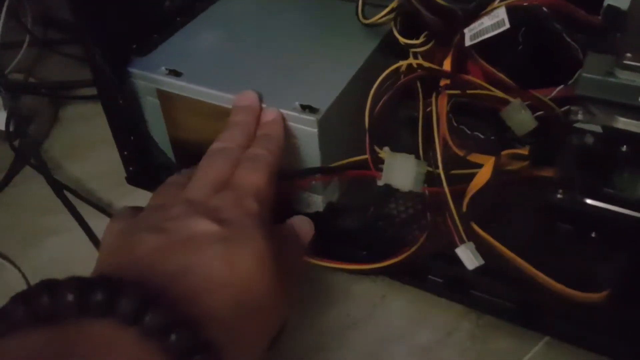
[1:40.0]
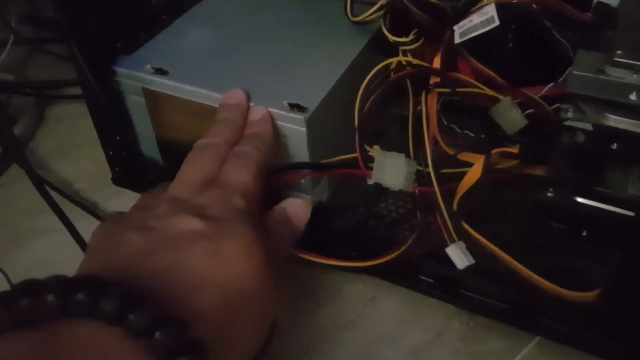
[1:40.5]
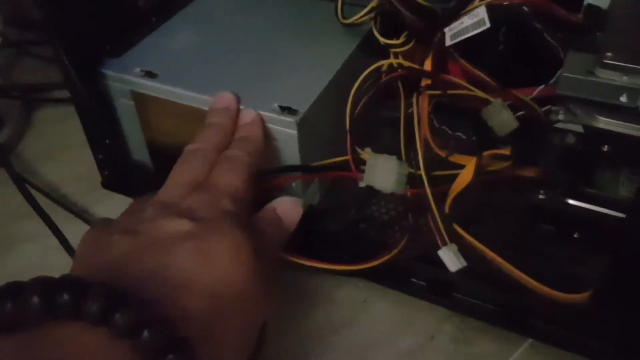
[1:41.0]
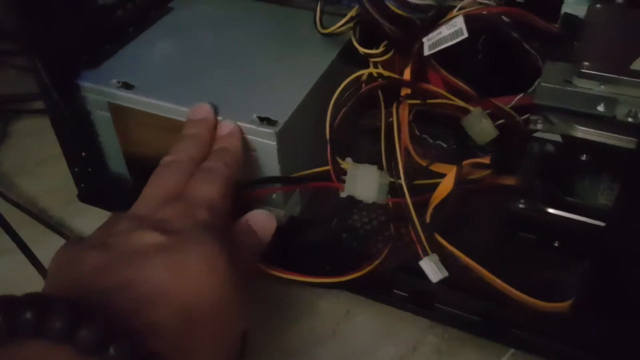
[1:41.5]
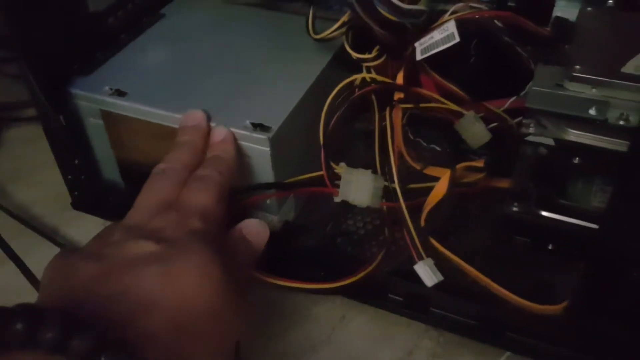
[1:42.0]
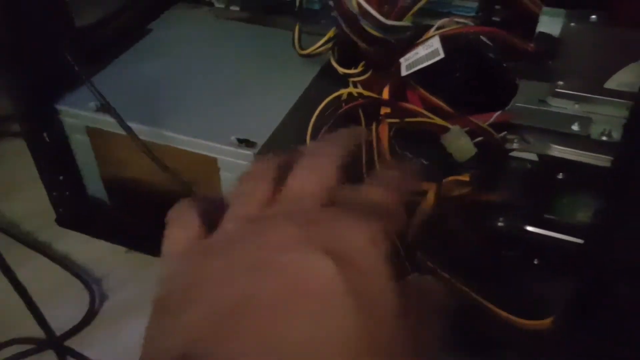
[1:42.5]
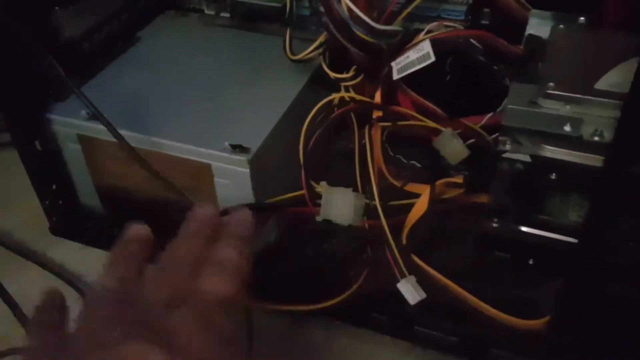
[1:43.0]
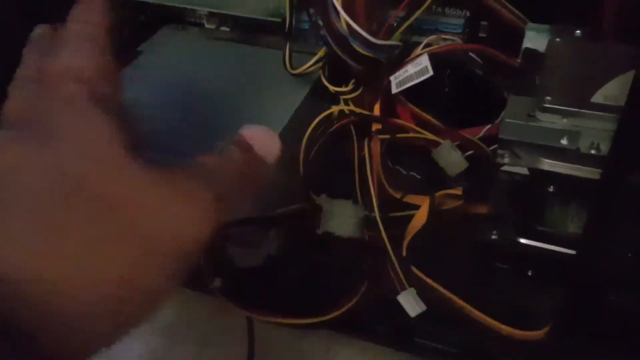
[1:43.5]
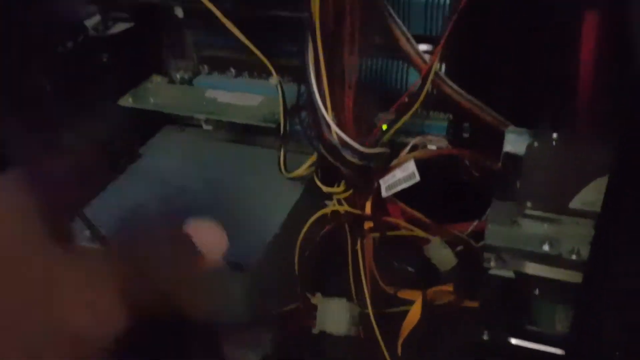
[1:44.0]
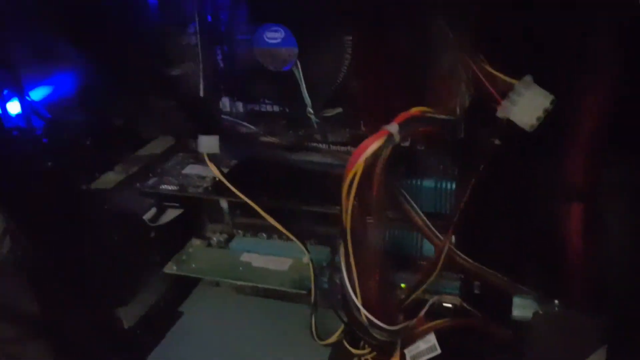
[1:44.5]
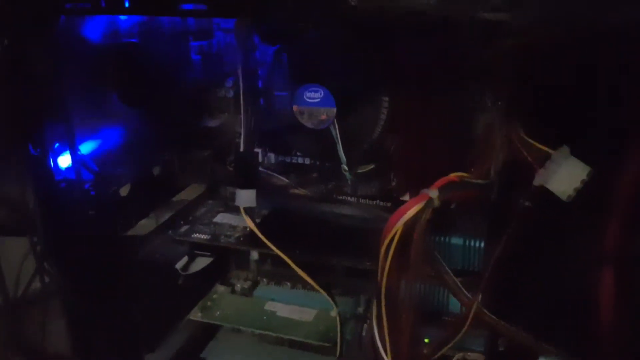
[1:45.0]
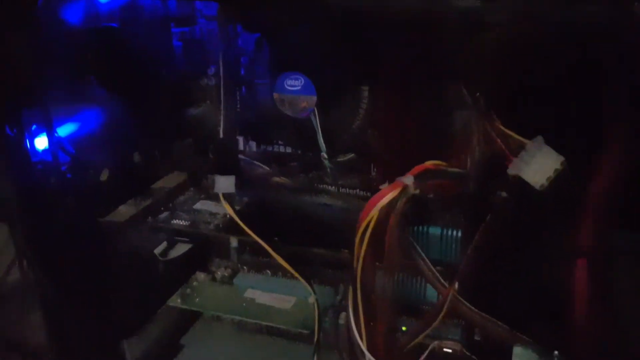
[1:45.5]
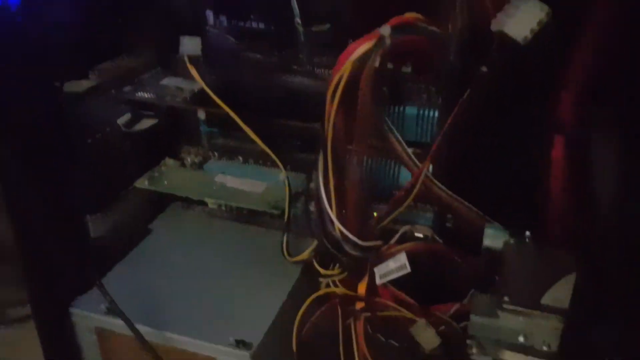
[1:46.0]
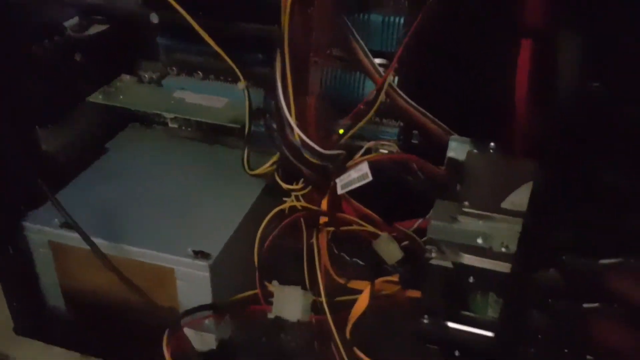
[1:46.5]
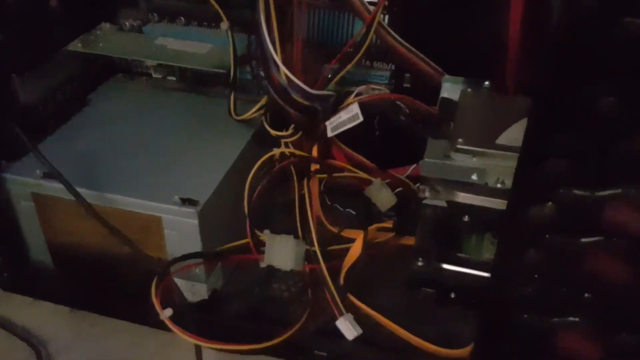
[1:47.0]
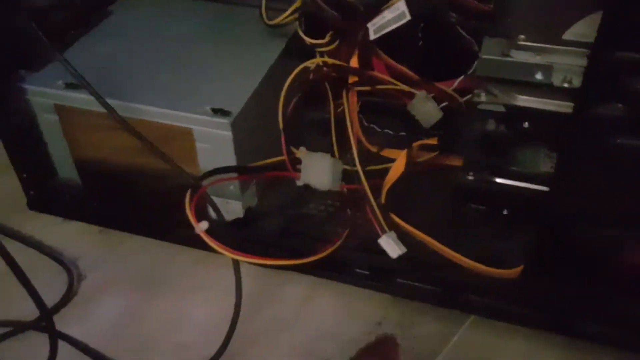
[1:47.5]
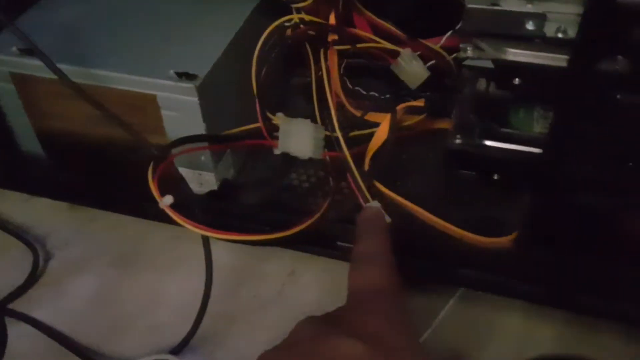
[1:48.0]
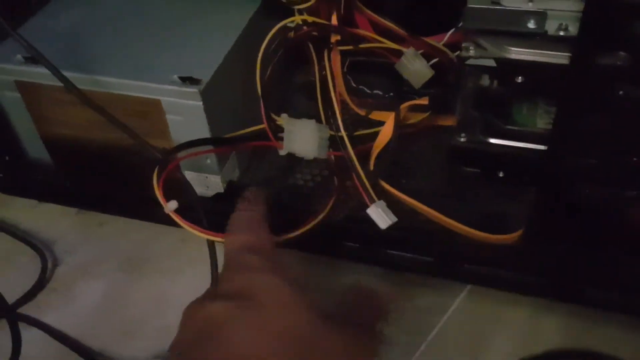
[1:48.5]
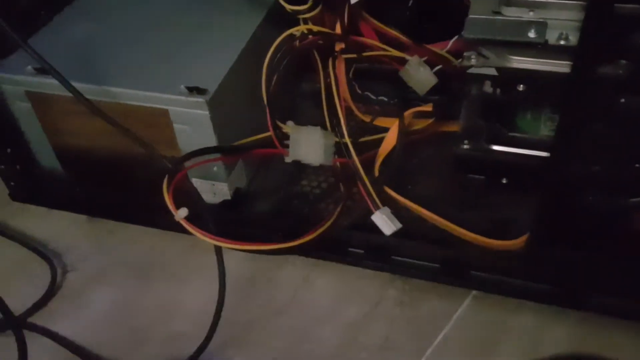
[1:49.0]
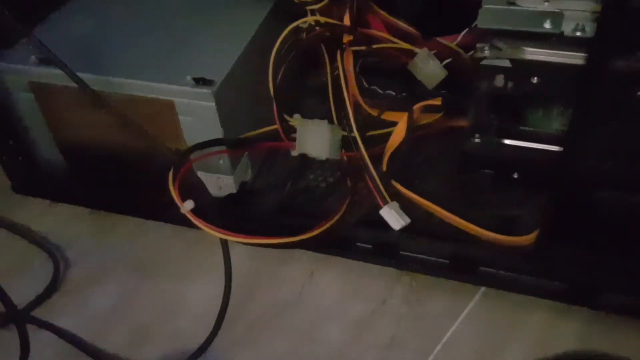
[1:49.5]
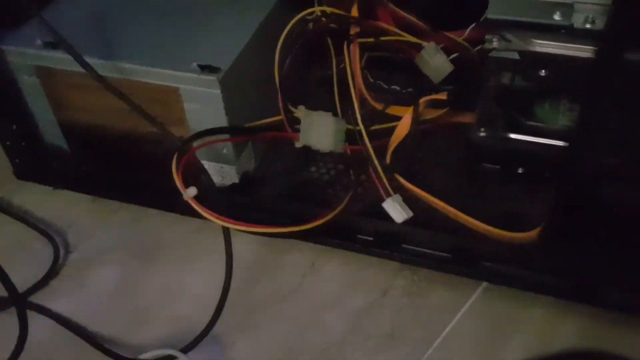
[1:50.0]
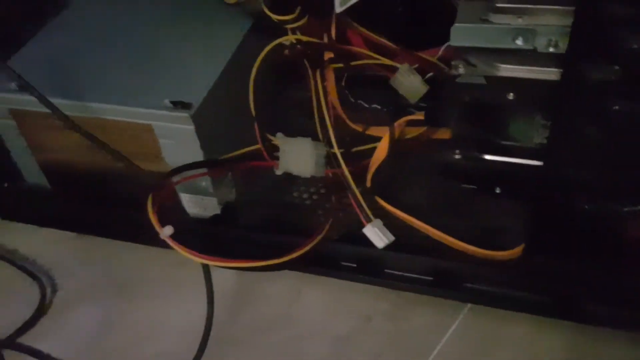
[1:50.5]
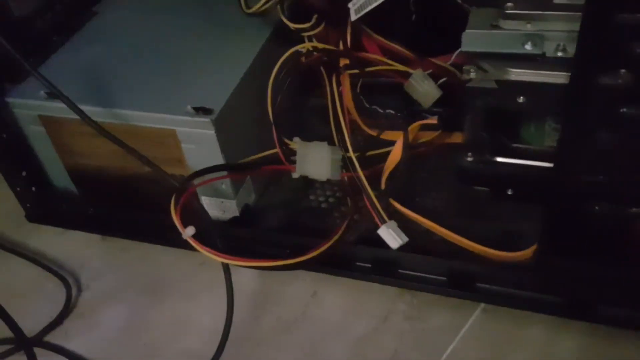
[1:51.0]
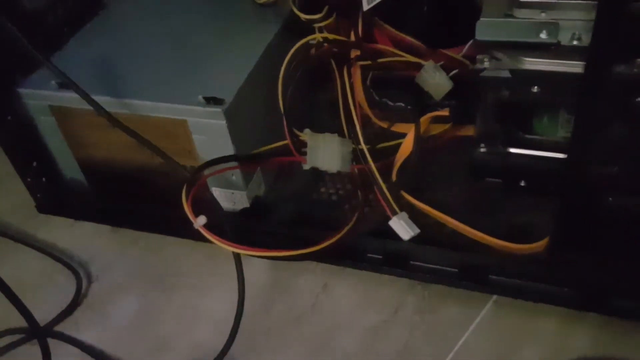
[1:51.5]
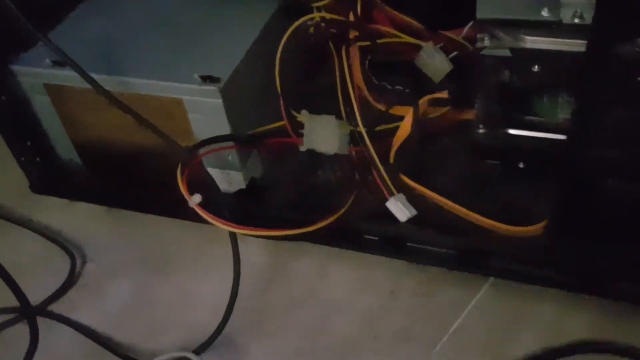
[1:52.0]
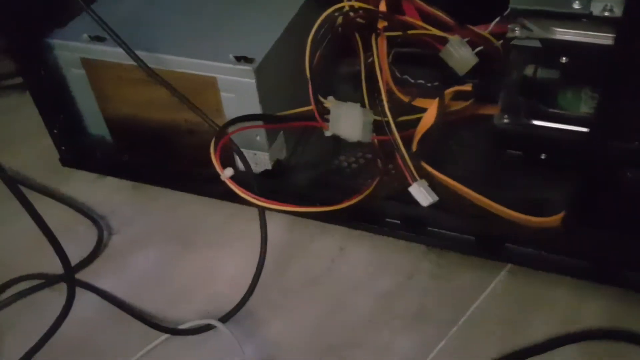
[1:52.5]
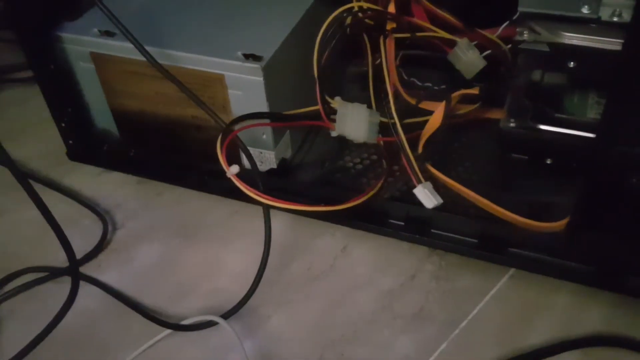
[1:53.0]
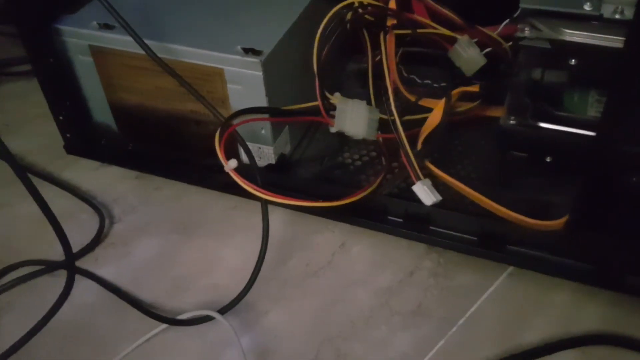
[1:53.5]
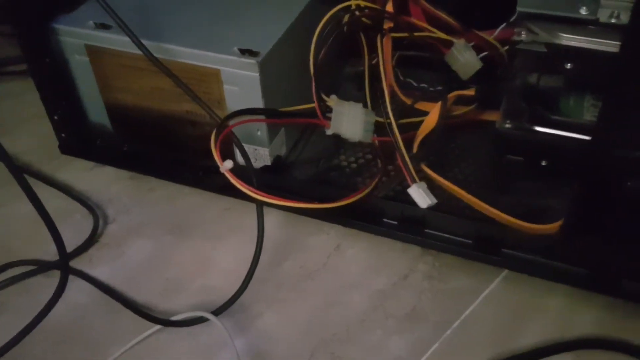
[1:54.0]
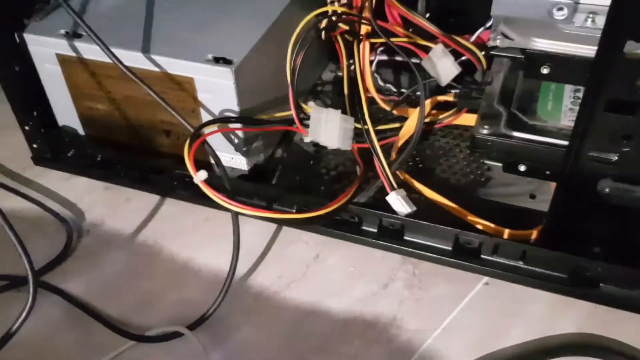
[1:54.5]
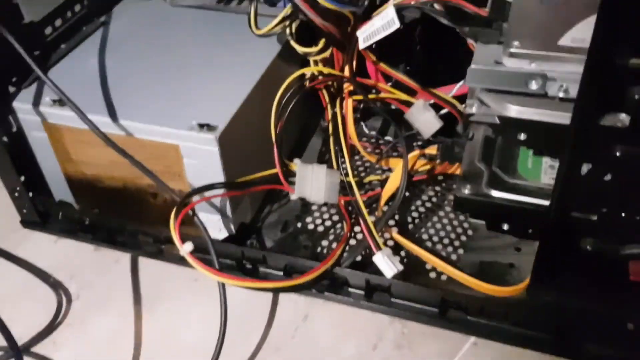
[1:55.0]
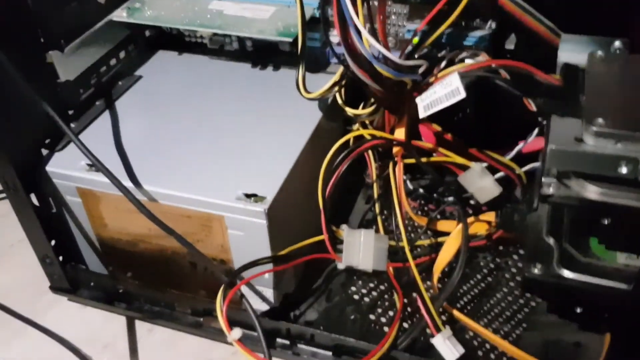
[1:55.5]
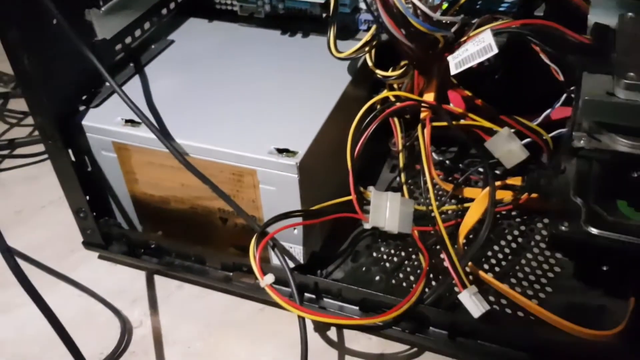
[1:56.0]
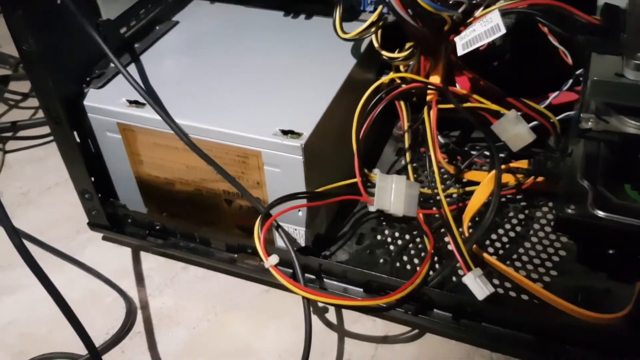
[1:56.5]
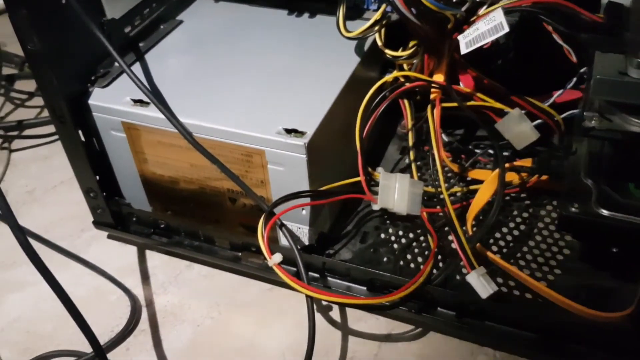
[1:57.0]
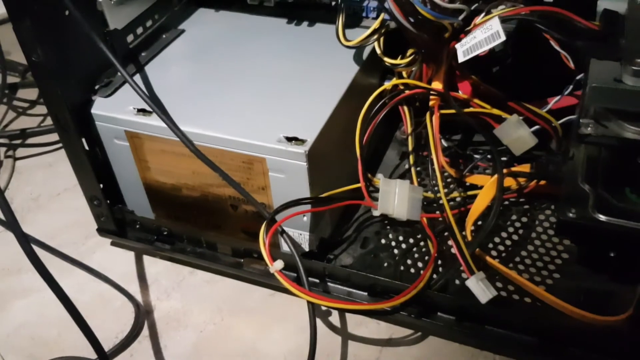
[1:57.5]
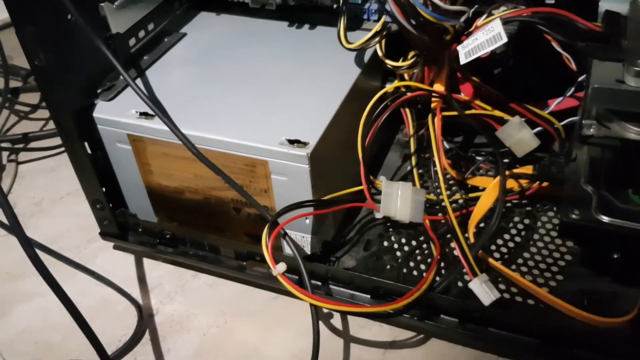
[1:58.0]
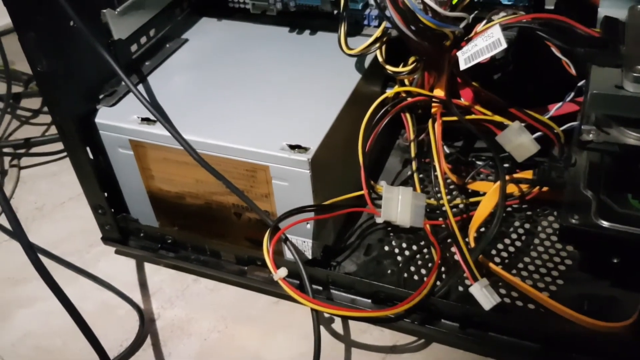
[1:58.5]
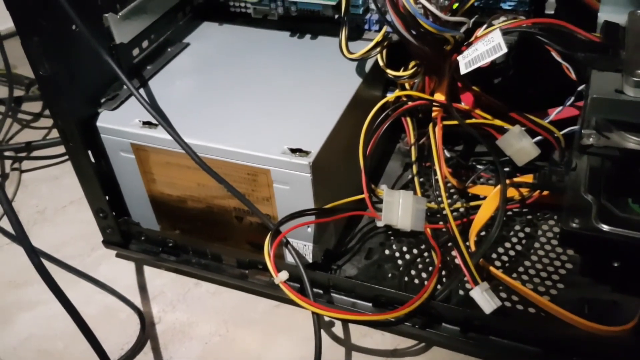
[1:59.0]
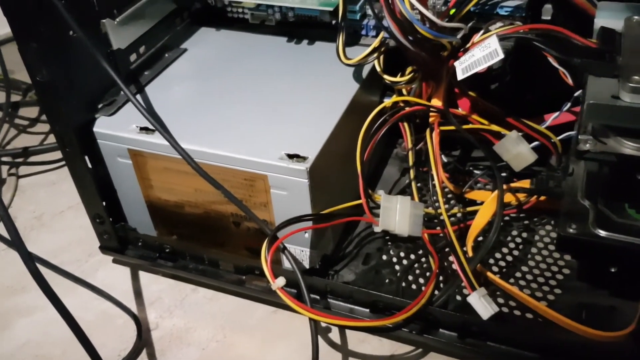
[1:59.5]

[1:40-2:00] Only the man's hand is visible, not his face or body. He points at the piece of hardware with the index and middle fingers of his left hand. The front of the hardware is now covered with a piece of something brown, kind of covering what are possibly its safety features. He also points with his left hand at cords that are kind of loose and dangling a little. Then he shines a bright flashlight at the whole contraption, lighting it up.